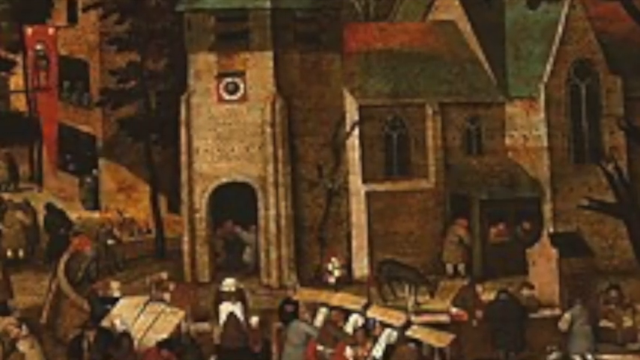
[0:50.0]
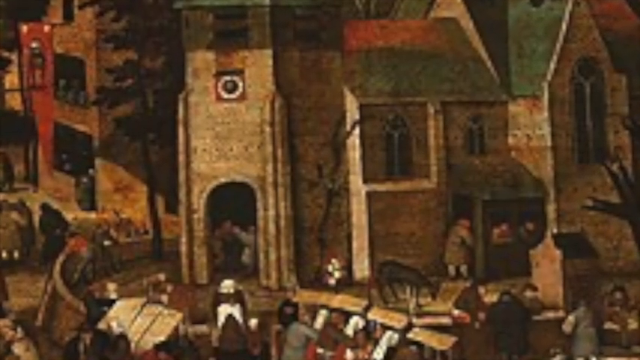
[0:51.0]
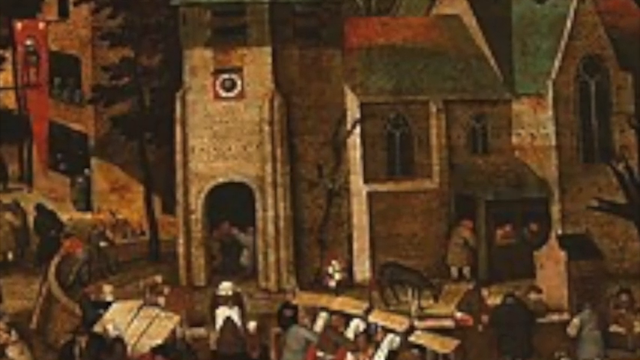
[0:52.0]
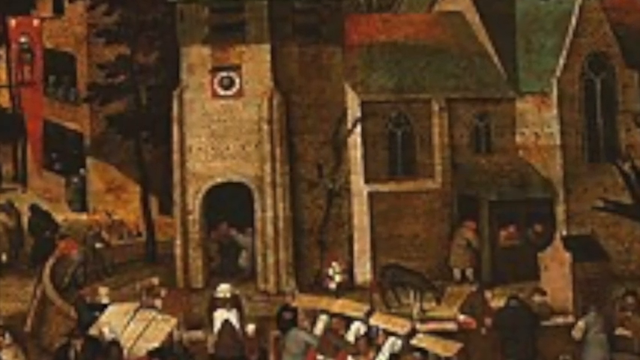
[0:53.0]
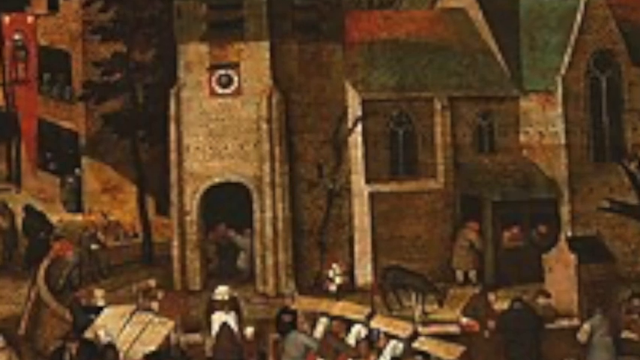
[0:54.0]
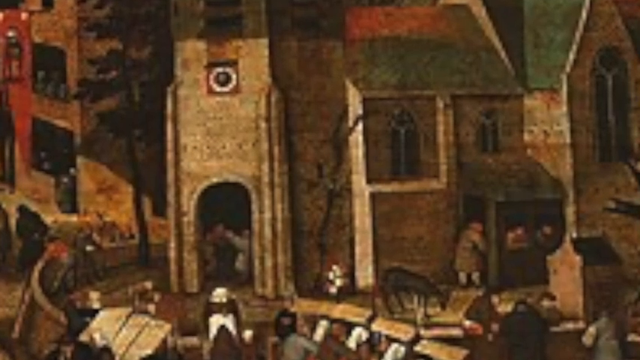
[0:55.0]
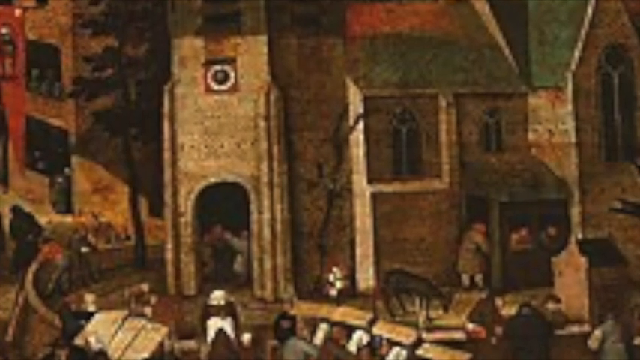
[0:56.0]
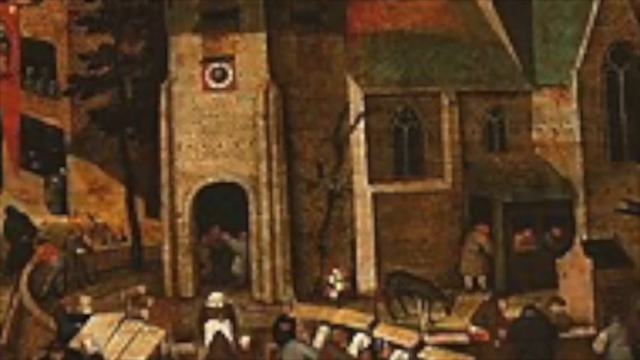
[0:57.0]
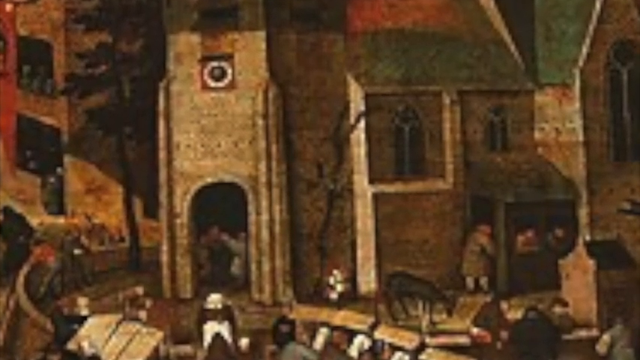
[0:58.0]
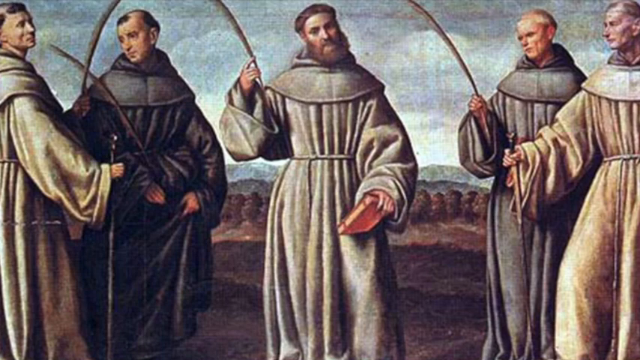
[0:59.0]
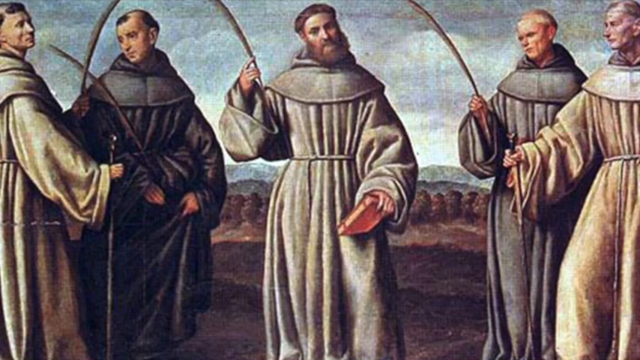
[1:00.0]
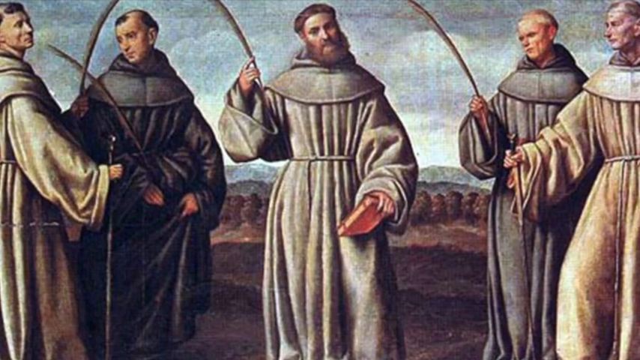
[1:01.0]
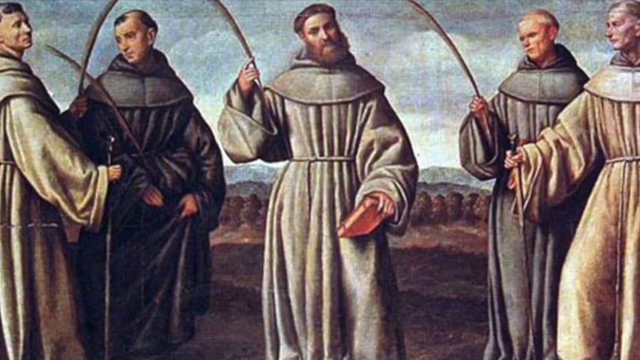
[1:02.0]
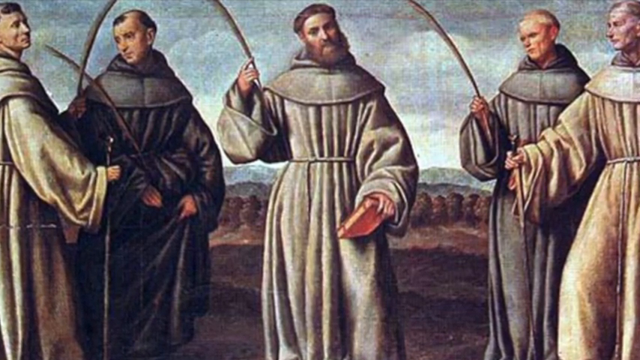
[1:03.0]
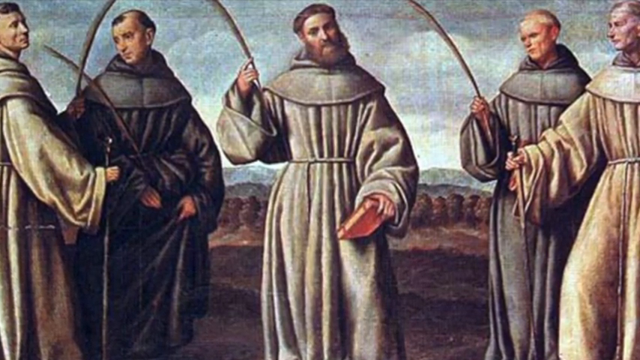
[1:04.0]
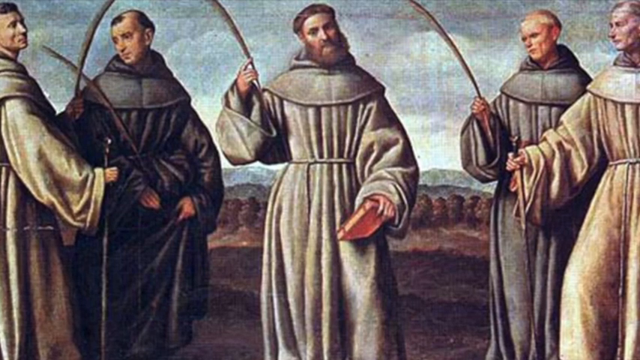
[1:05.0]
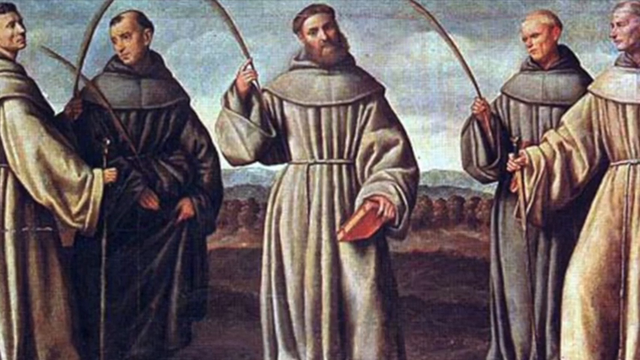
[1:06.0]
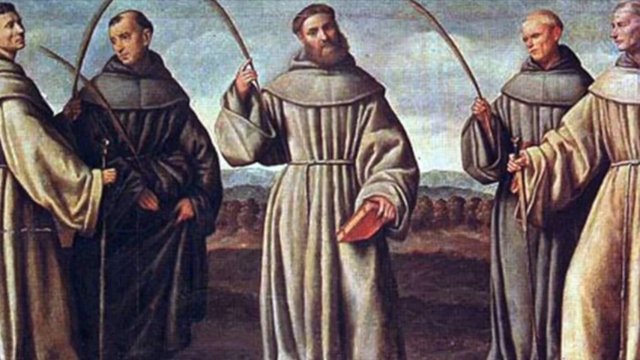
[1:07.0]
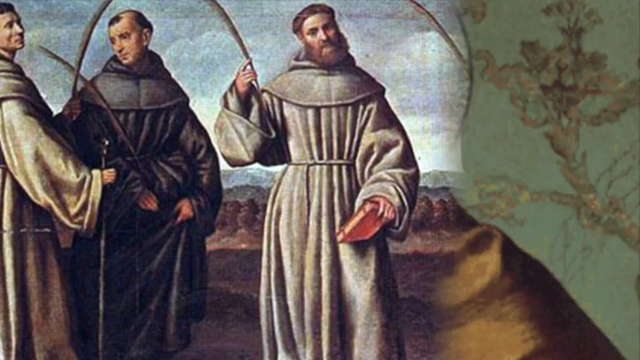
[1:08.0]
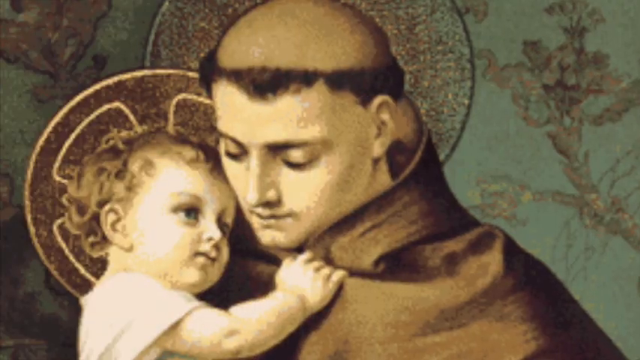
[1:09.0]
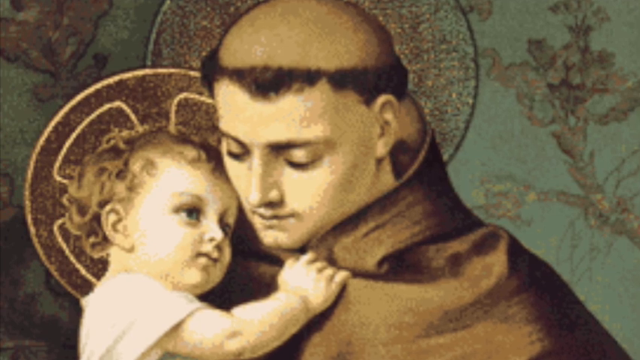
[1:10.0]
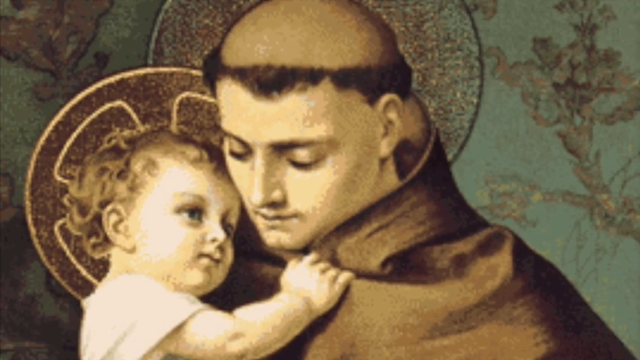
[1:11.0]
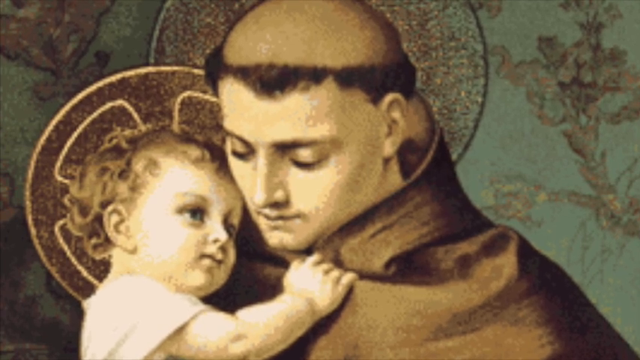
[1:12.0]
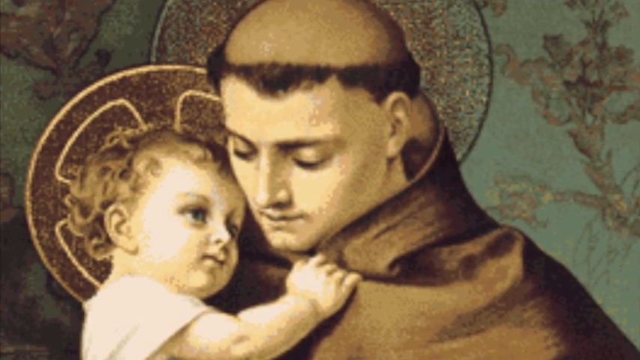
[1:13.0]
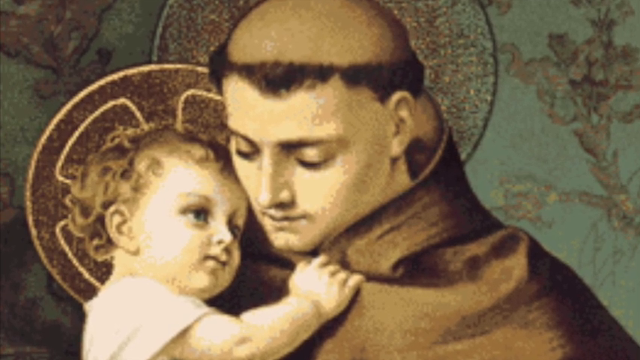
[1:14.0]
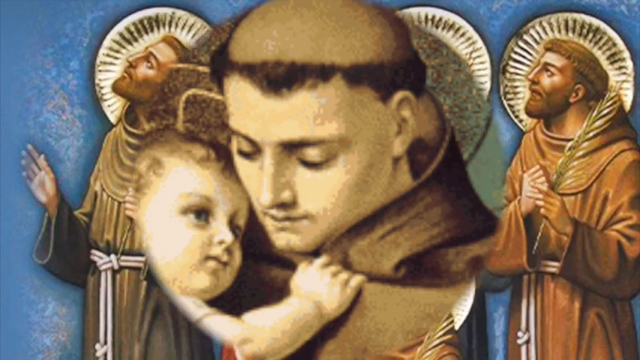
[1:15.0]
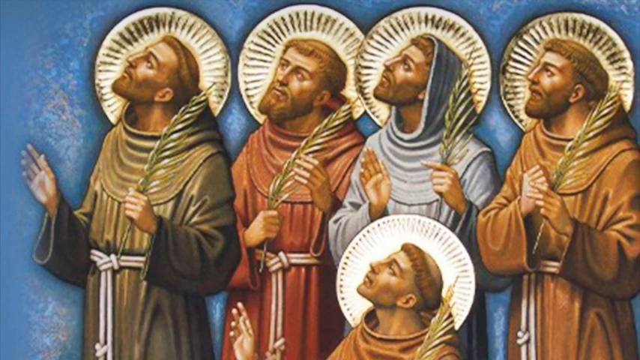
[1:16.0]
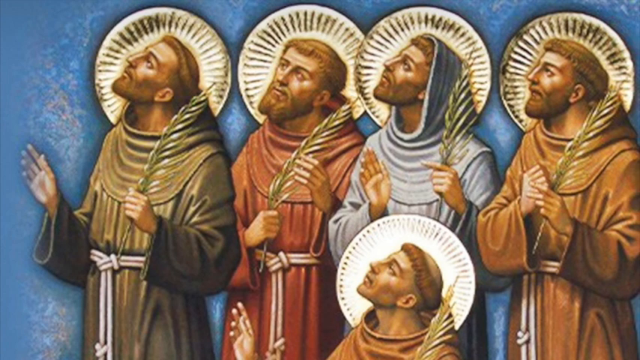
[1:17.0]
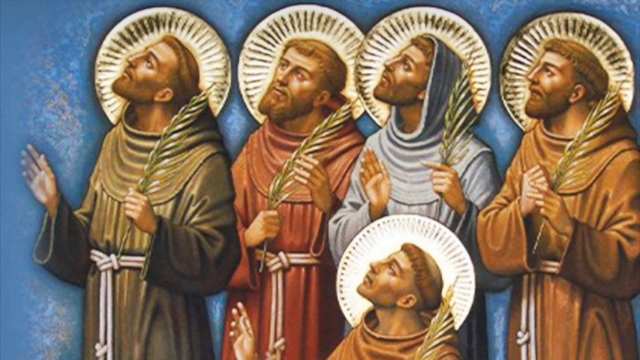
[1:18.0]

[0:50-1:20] Another painting appears in a zoomed-in shot of a town or a church. On the left-hand side is a column with an archway, and there are people in the foreground; the image is quite blurry. There seems to be a tree on the left, and on the right some people are inside a porch or building that looks a bit like a church, with what look like stained glass windows, though it is very blurry. The camera zooms in. This transitions into the same painting as before of the five religious figures: the one in the center holds the red book, the others hold large feathers, pens or quills, and the two on either side hold walking sticks. It then transitions to a new painting of a male with a headband around his forehead and a small child on his right-hand side hugging him, the baby's right hand holding his robe. The background is like a pattern, with two circle patterns and some lines.